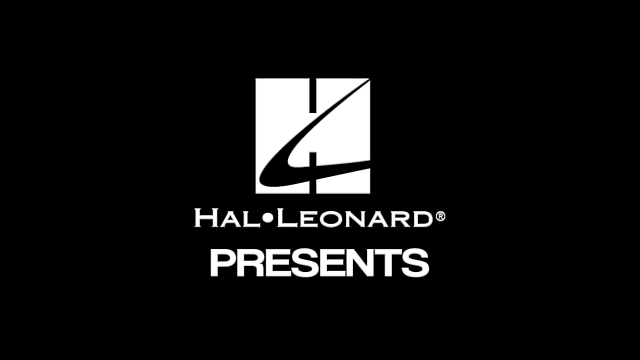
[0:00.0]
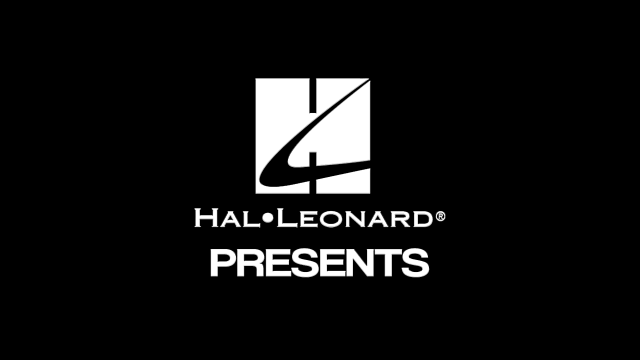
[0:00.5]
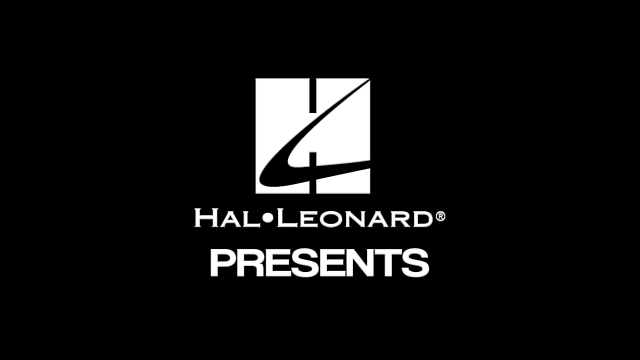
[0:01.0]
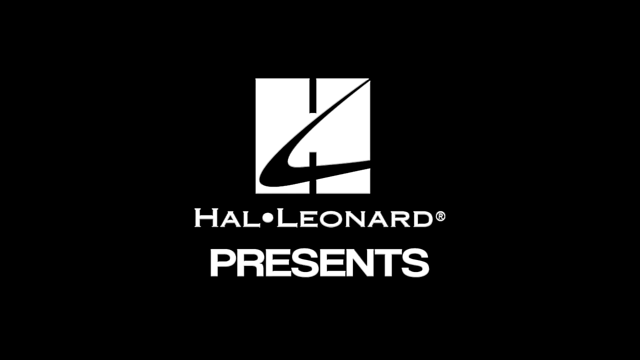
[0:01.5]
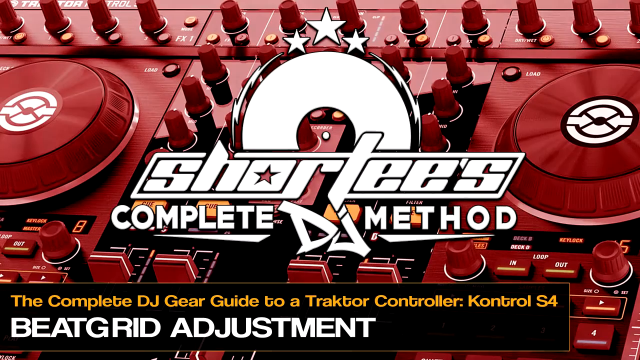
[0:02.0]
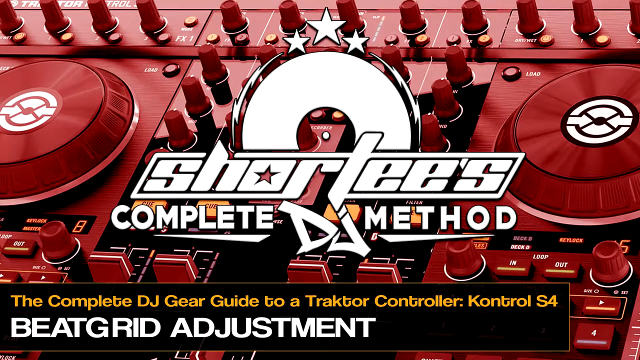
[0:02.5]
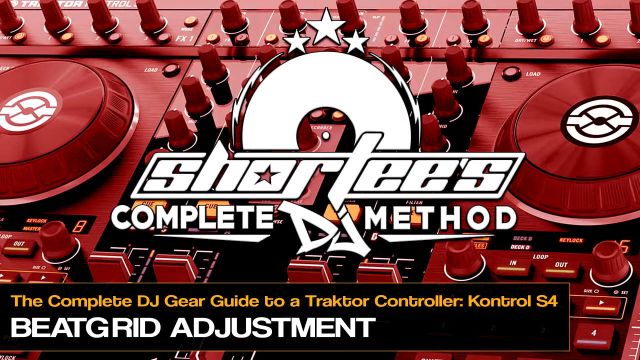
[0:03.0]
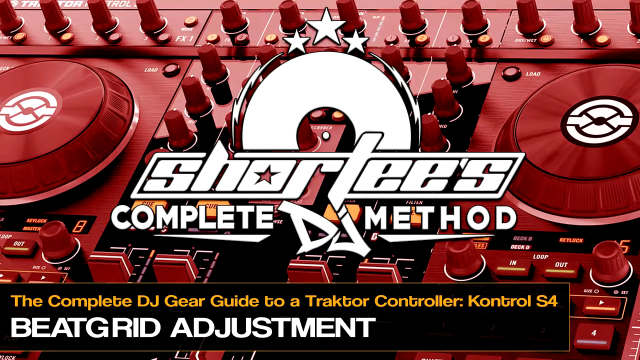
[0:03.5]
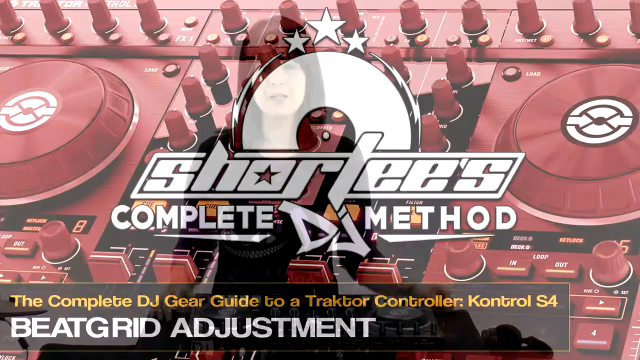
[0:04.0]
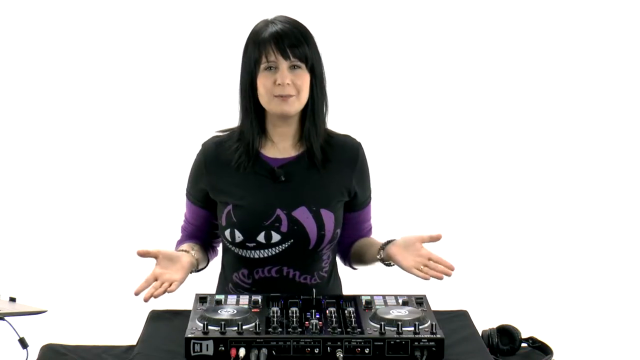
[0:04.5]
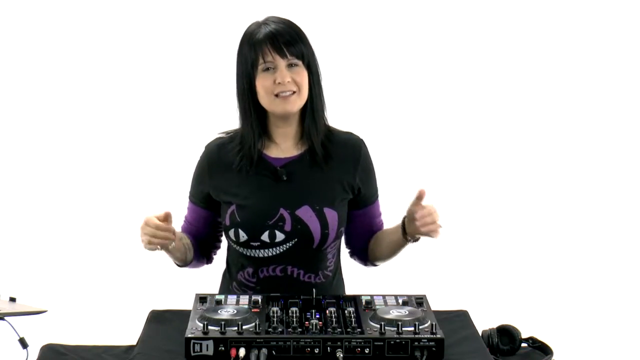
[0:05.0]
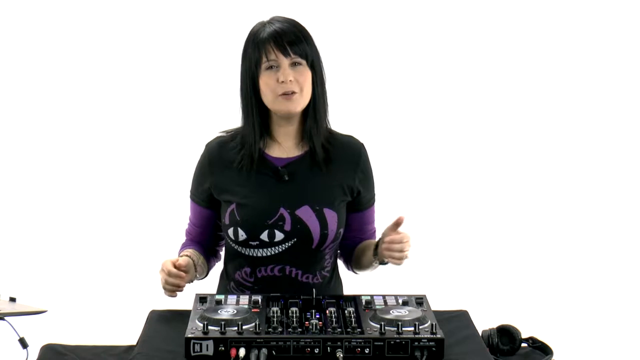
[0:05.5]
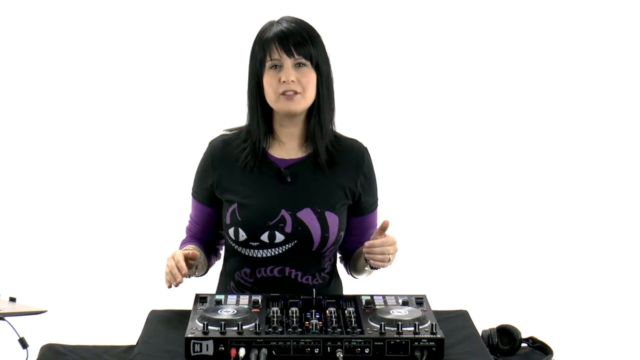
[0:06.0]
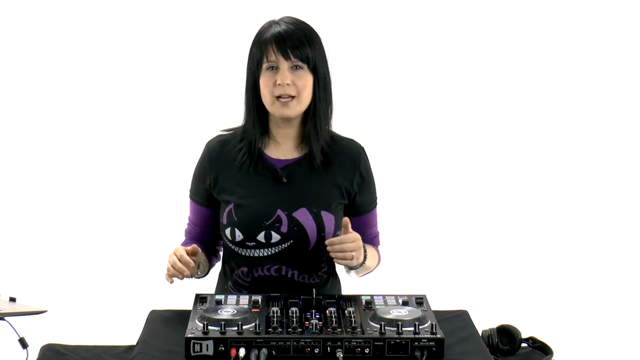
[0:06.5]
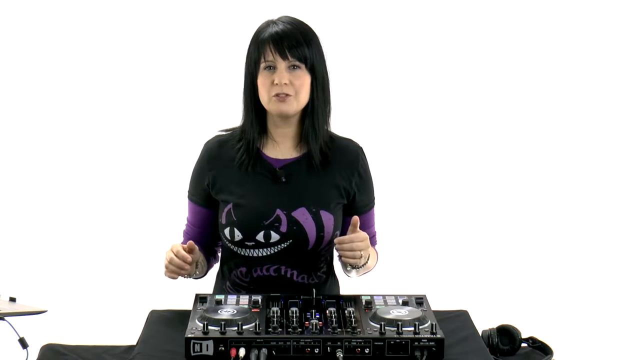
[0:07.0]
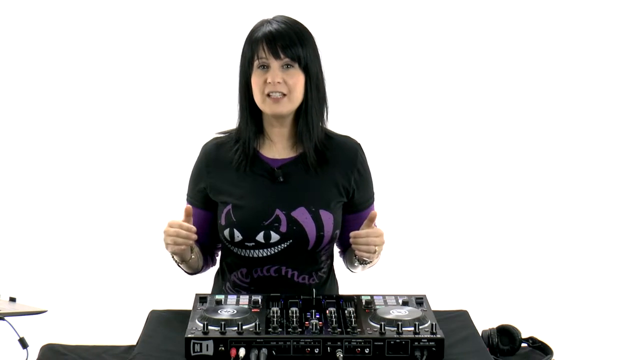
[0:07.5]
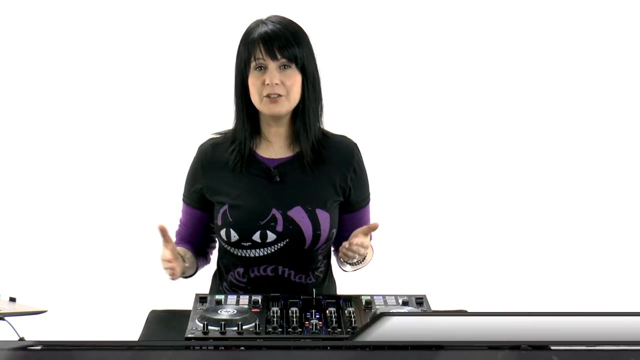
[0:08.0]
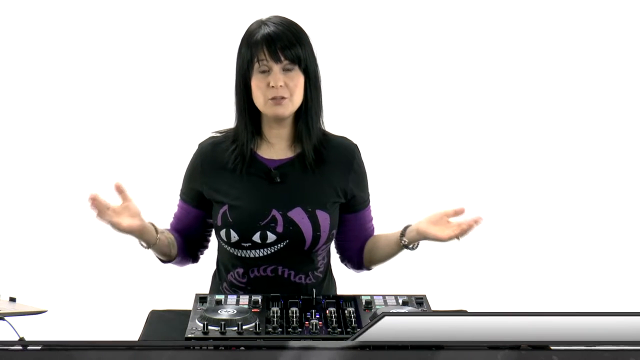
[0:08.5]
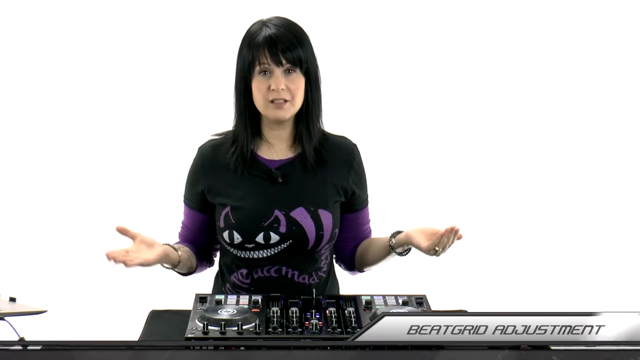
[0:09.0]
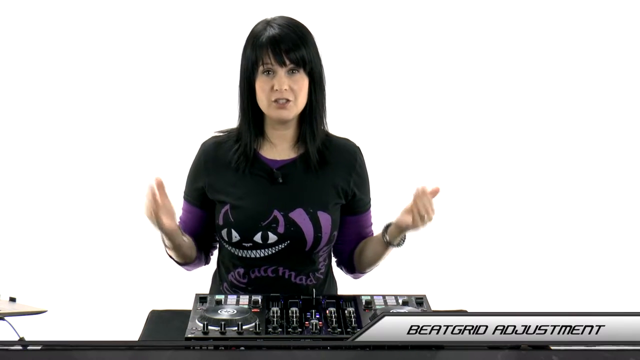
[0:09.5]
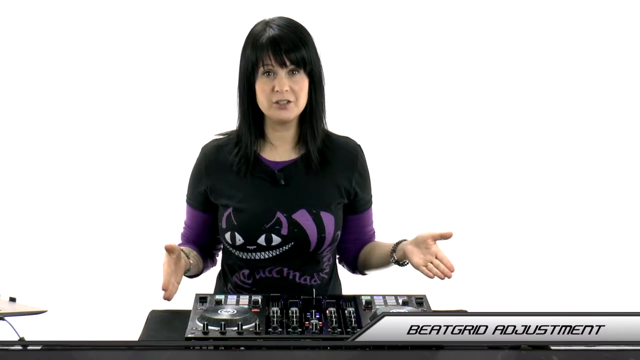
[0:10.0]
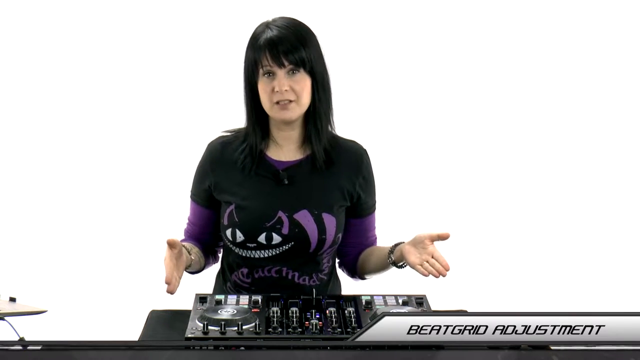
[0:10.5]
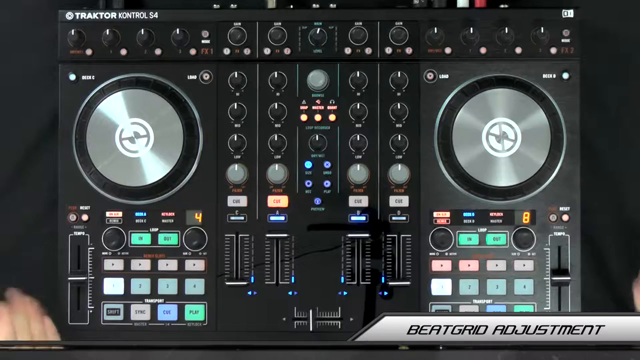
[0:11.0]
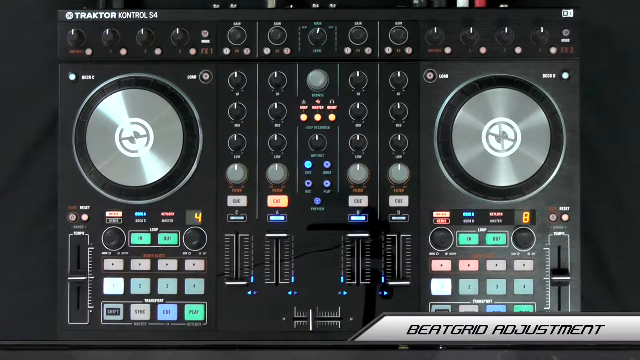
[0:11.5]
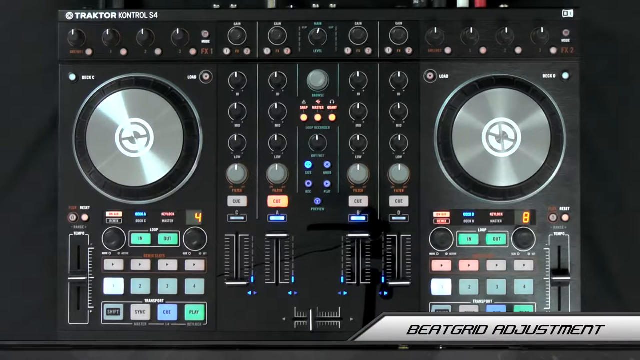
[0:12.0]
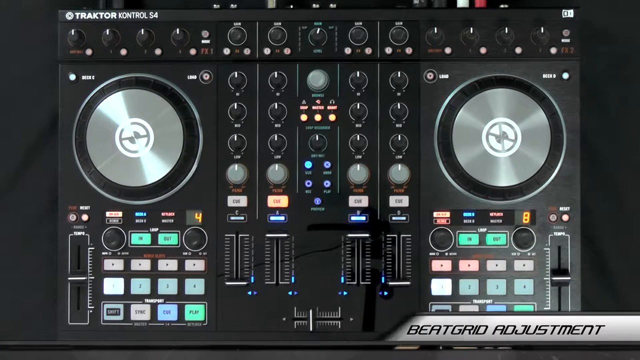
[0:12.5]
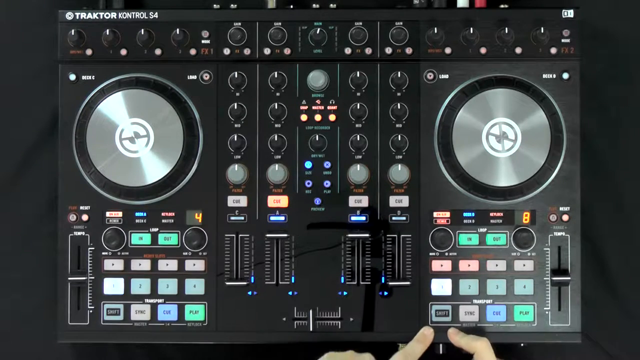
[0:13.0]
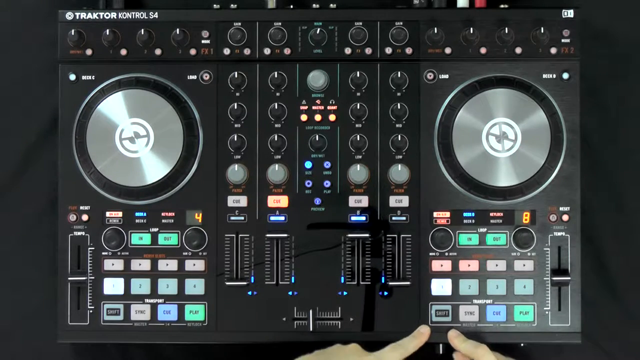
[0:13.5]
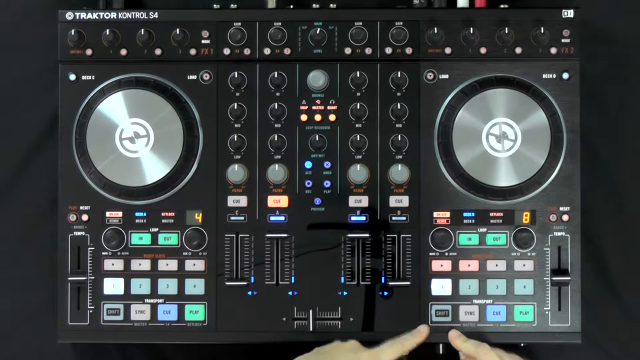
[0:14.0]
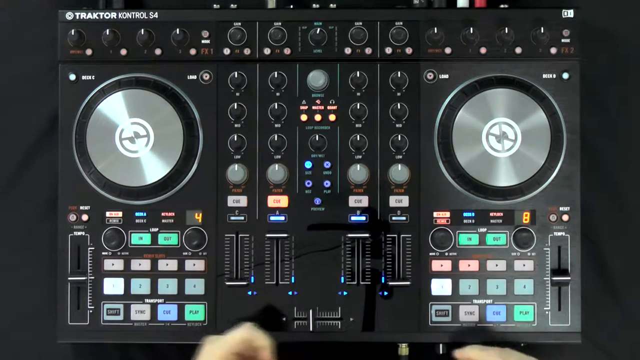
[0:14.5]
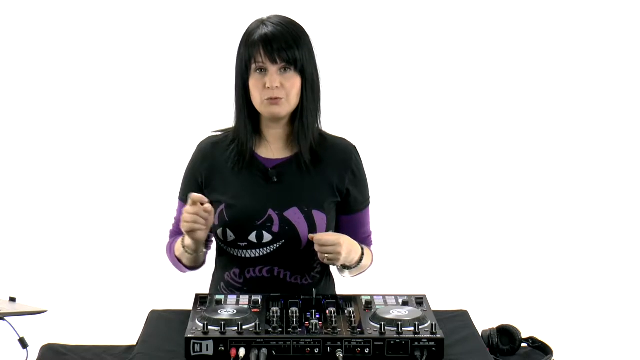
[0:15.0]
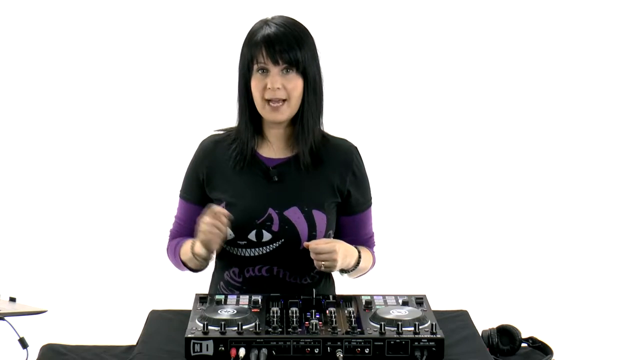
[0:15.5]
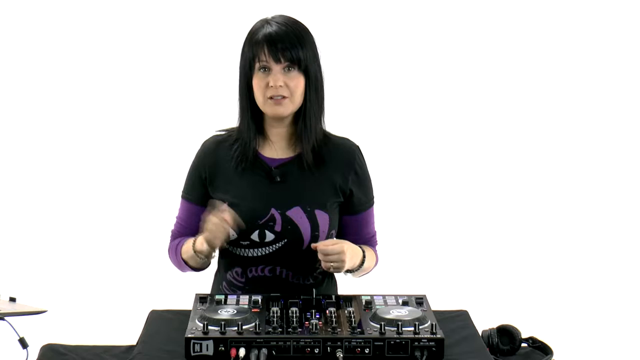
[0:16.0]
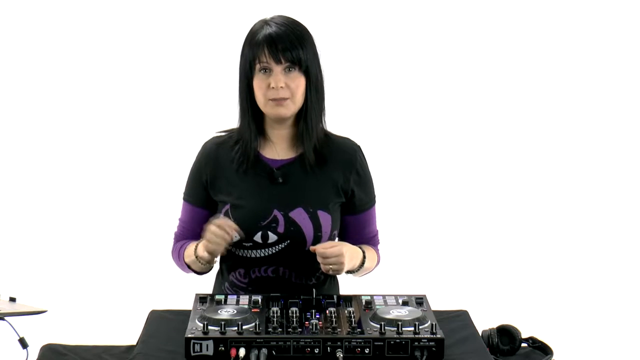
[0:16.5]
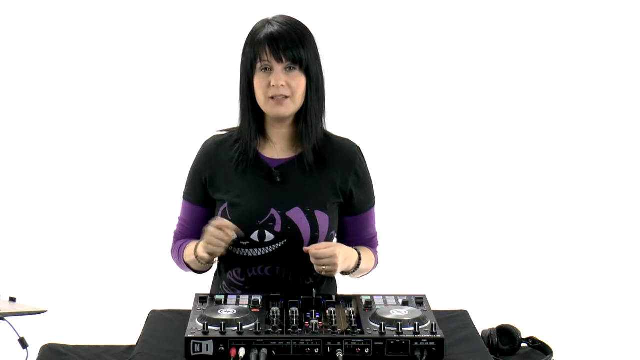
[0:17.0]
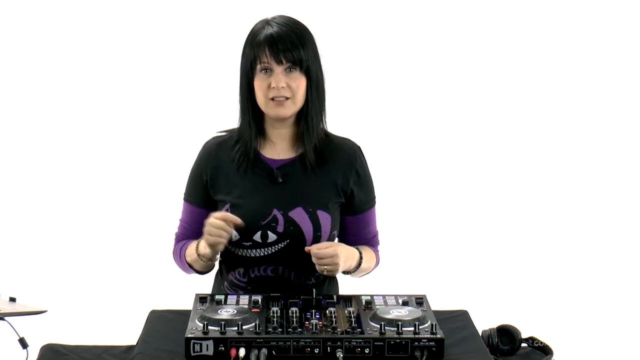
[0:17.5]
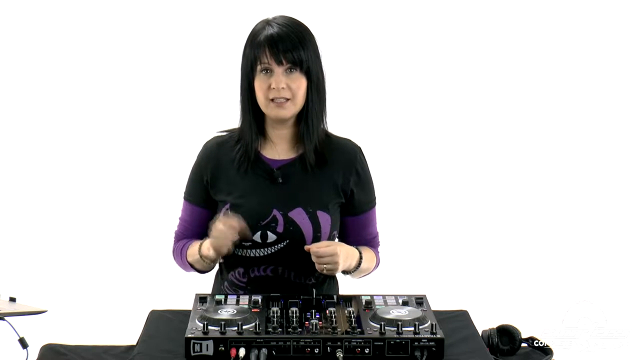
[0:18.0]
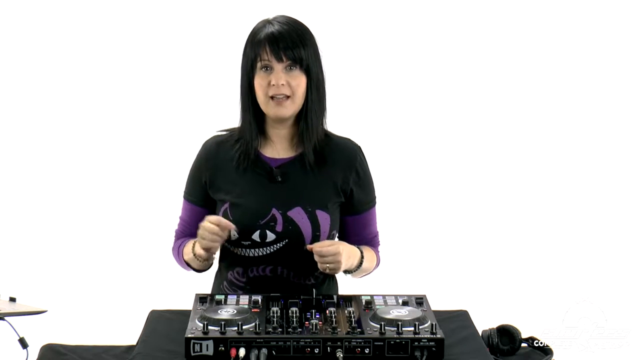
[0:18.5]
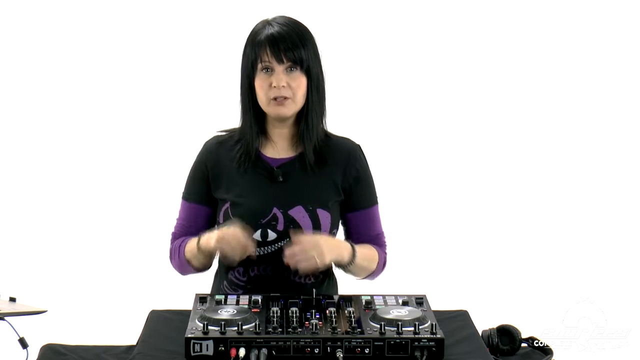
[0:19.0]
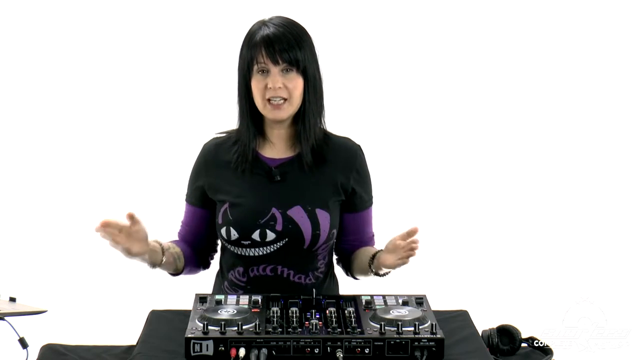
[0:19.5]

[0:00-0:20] The video opens on a black screen with white letters reading "Hal Leonard presents," with a white symbol above it that has a black swoosh. Next comes "Shortee's complete DJ method," and beneath that text about a "complete DJ gear guide" for the "Traktor controller," "Kontrol S4," "beat grid adjustment." The picture shows what seems to be a control board or music synthesizer, red, with lots of knobs and lots of data. A woman appears, maybe in her late 30s, Caucasian, with dark hair. She wears a black and purple shirt with cat eyes and a cat on it and stands in front of a mixing board or synthesizer.